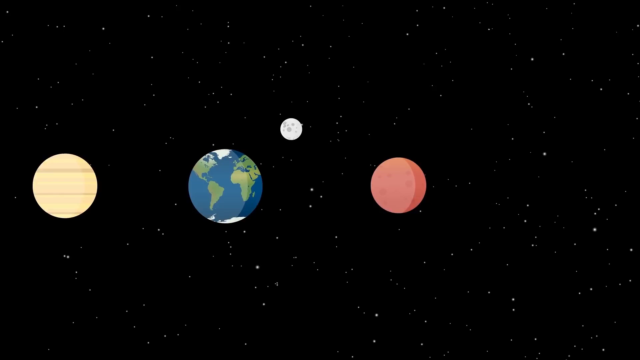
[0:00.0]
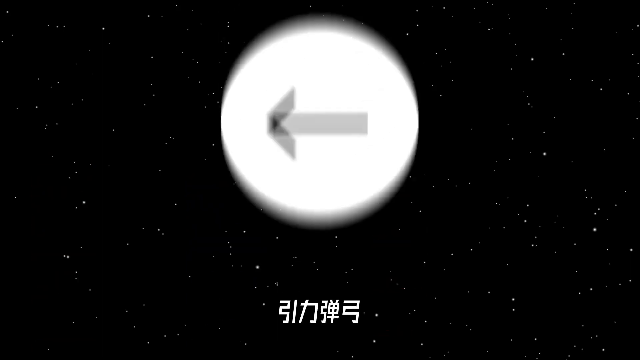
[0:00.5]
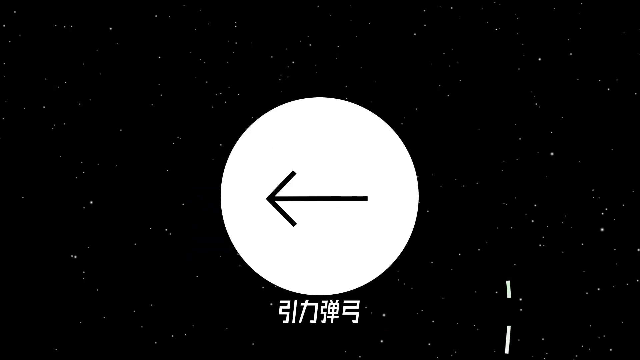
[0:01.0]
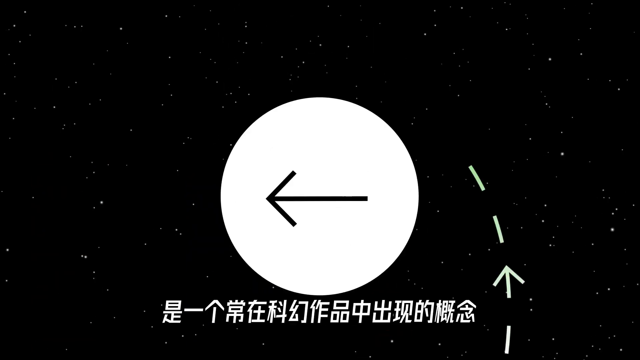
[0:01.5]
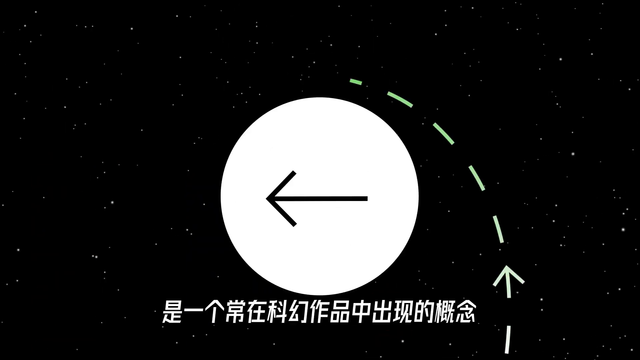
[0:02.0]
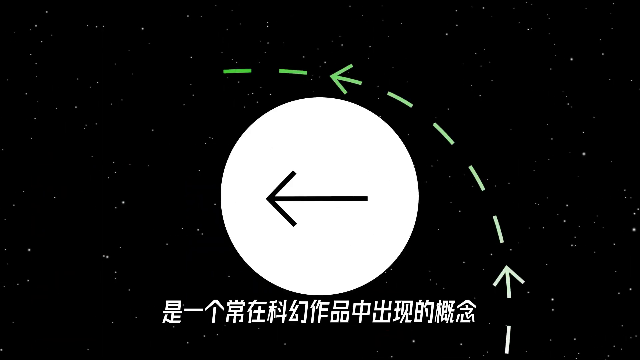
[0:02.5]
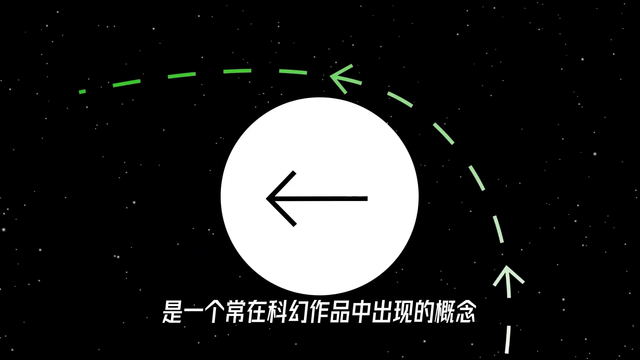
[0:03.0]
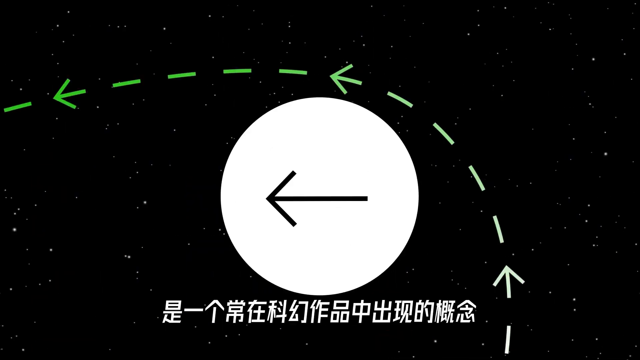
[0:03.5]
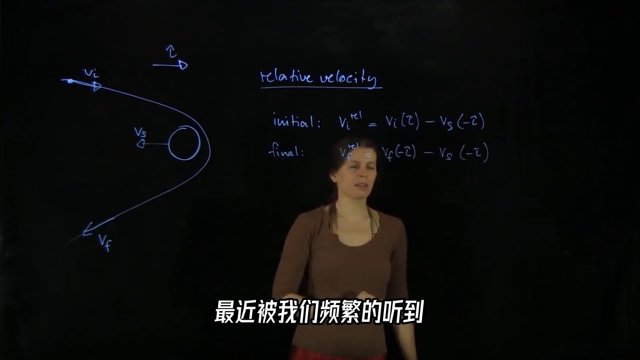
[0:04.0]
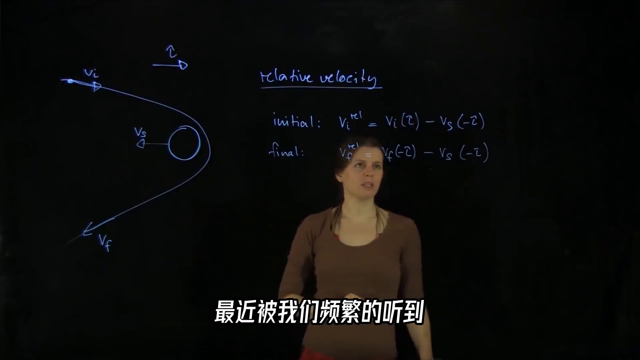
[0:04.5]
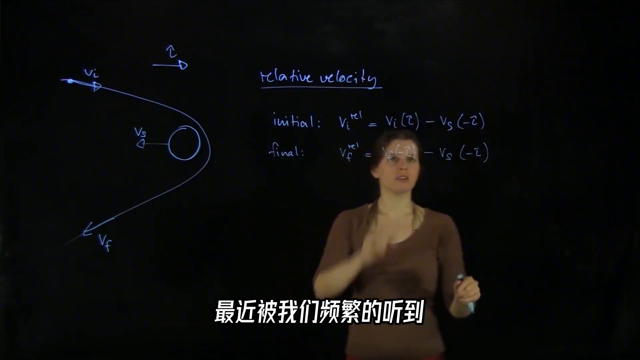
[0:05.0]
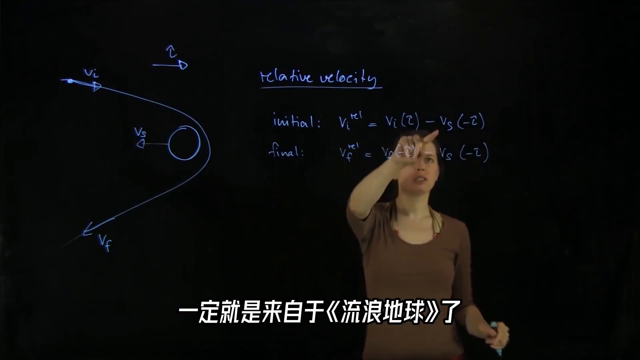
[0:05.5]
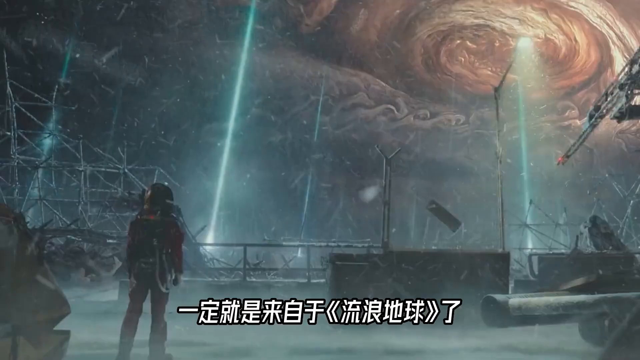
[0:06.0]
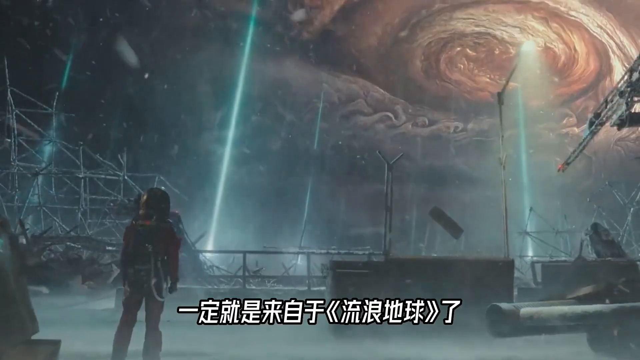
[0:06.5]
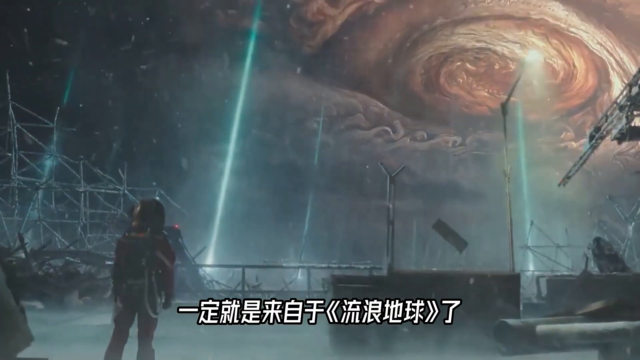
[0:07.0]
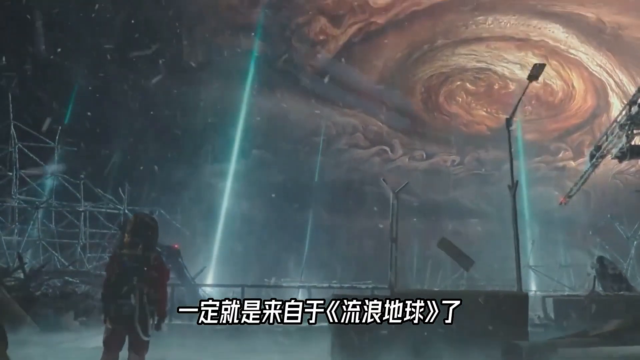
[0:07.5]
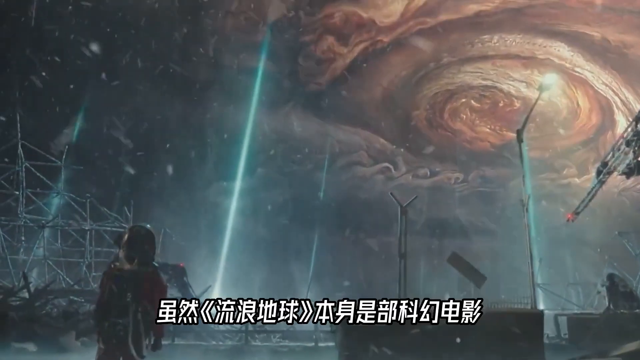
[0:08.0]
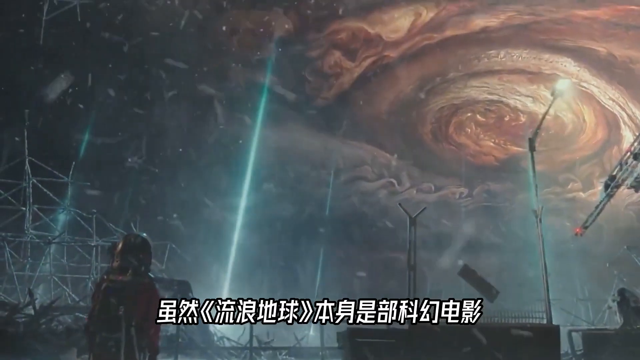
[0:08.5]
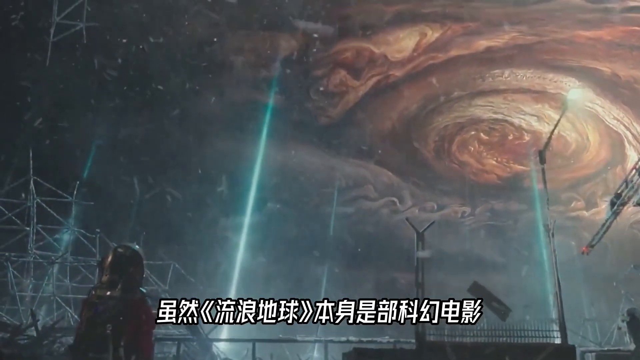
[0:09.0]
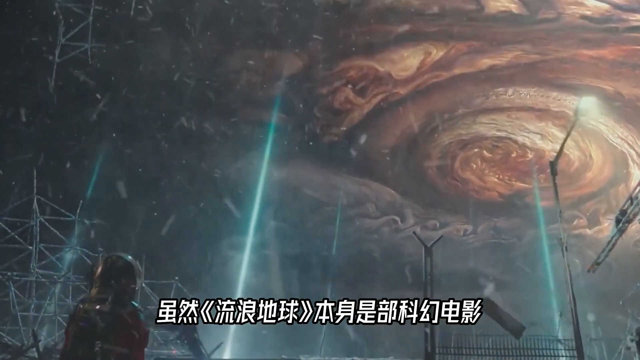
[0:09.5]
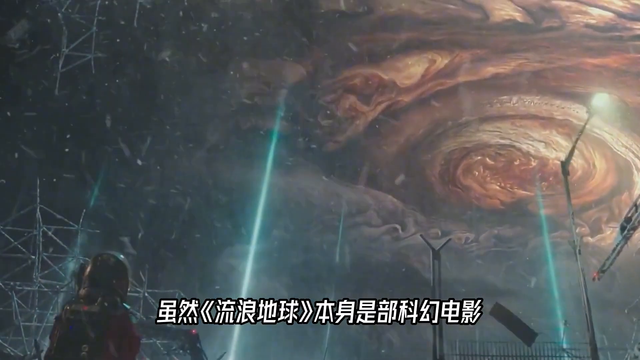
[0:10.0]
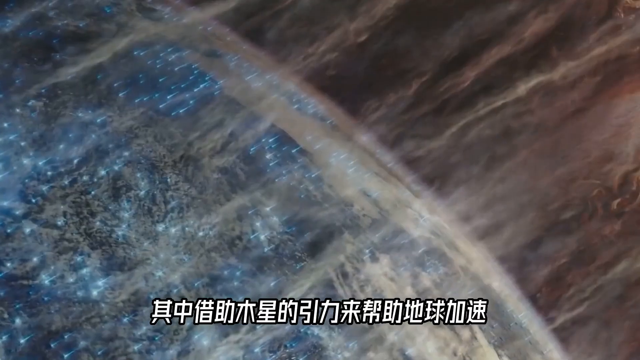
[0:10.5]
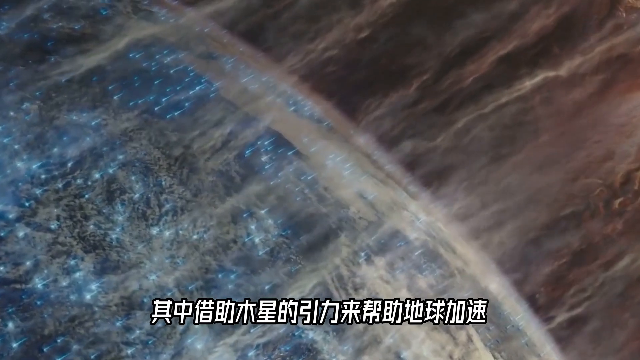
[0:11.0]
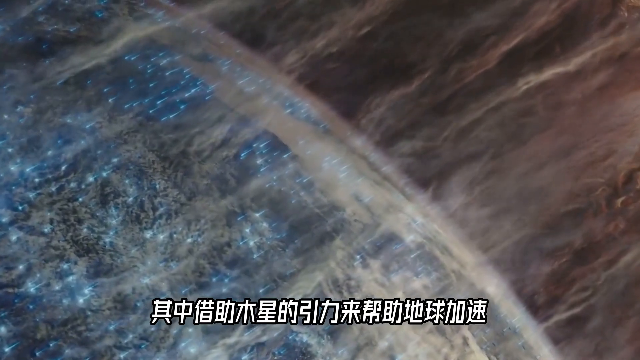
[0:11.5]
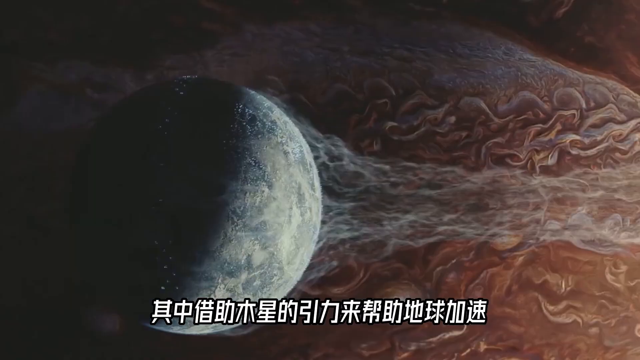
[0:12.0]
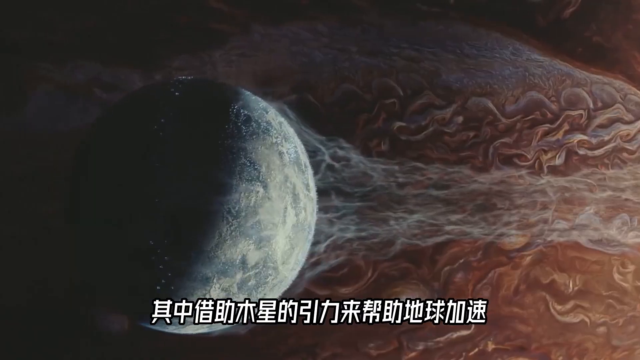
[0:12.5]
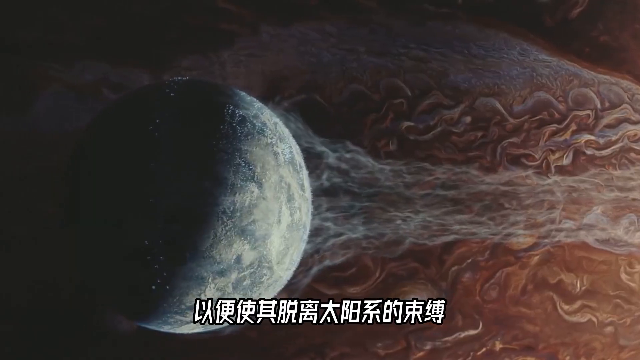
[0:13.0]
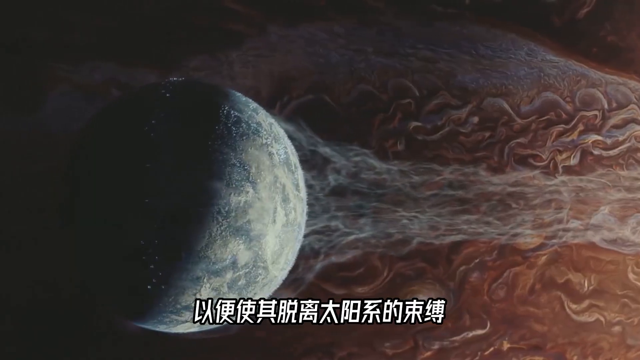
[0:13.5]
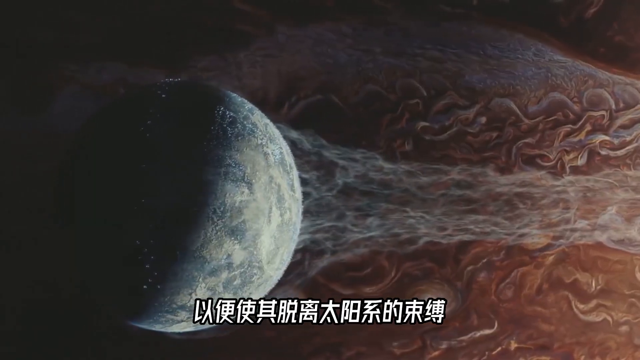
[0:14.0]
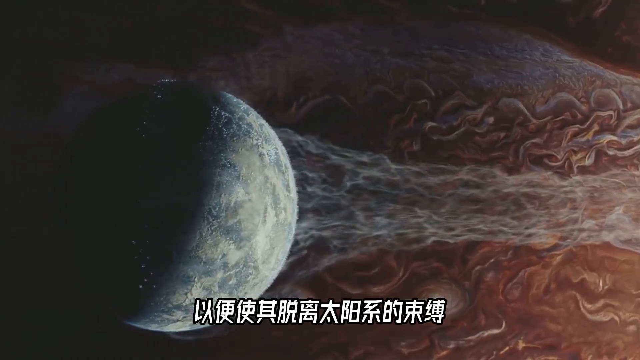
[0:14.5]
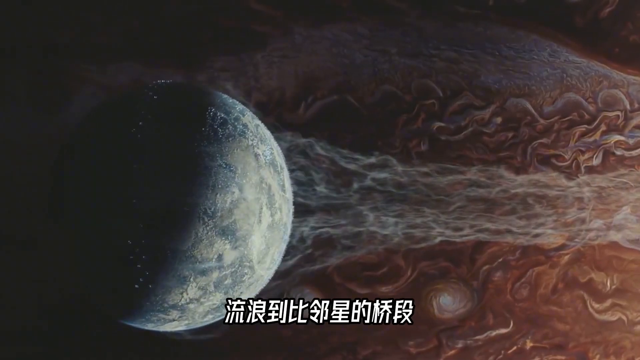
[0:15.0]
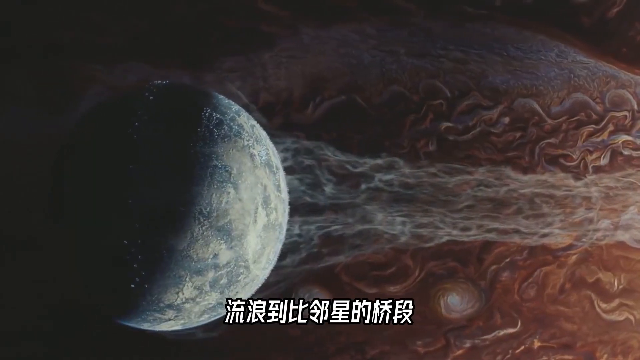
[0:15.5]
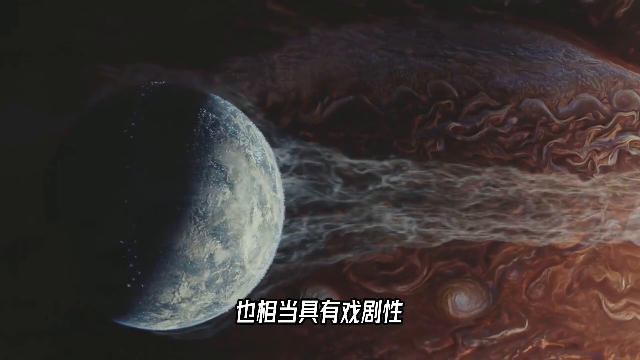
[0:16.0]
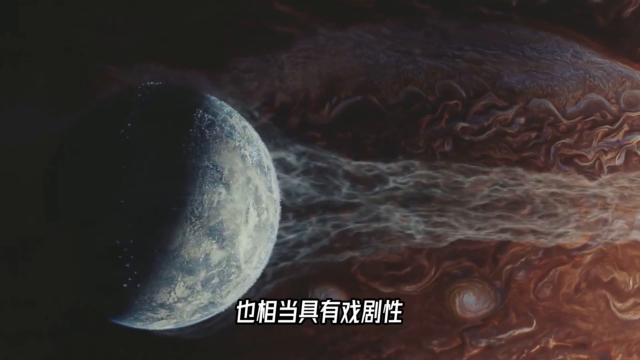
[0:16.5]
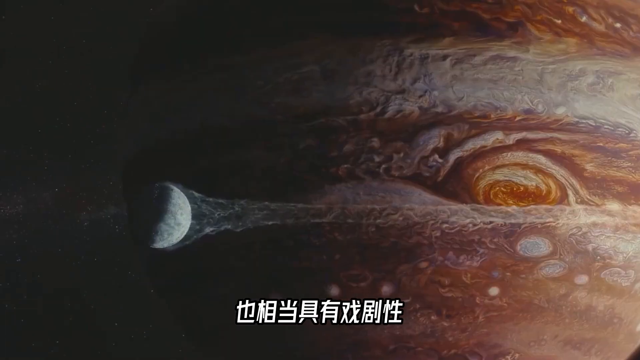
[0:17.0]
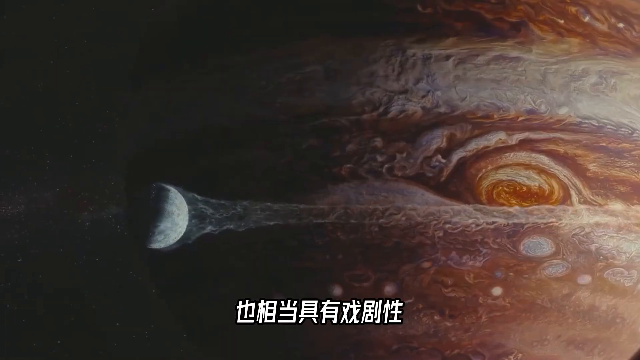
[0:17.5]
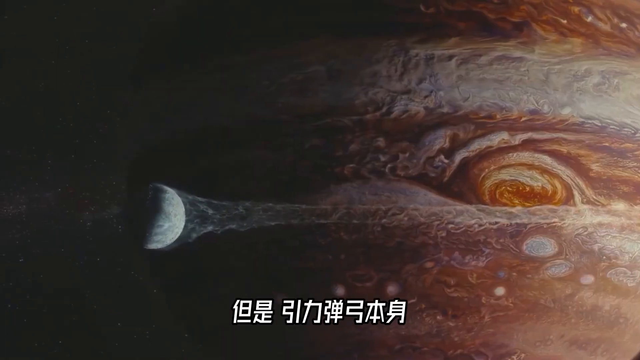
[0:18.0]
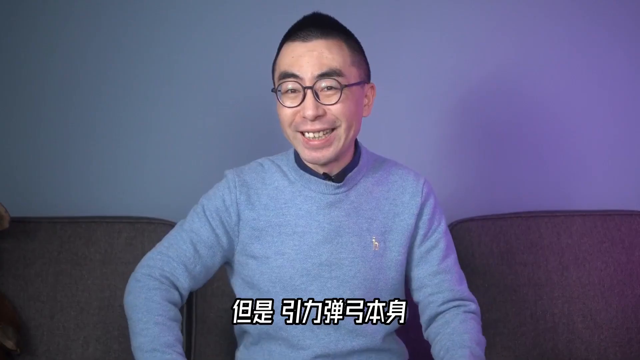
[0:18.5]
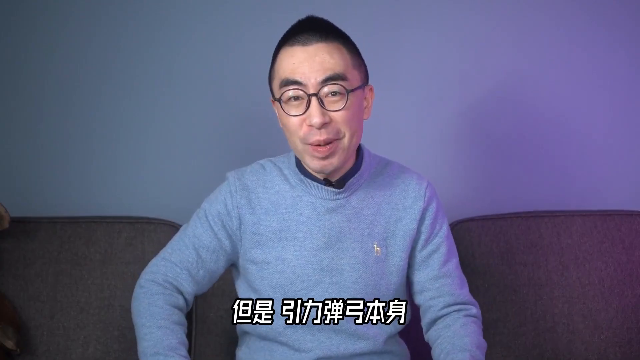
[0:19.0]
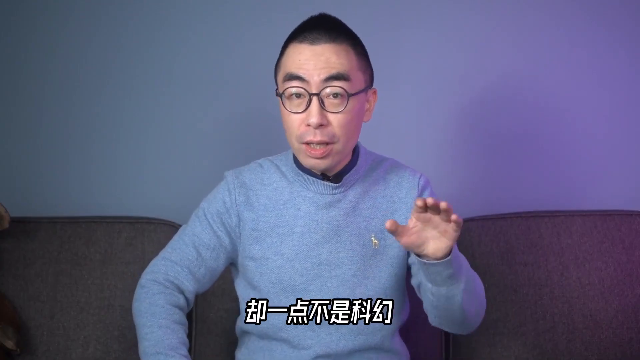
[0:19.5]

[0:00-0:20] An animation of the solar system opens the video, with planet Earth in the middle surrounded by three other planets and countless stars in the background. A new animation follows, showing a large white circle in the middle of the screen with an arrow pointing to the left at the center of the circle. A green dotted line makes its way over the large white circle and out into outer space. Next, a Caucasian woman wearing a brown shirt appears; in front of her, the theory of relative velocity is written on the screen, and she points to the equations. A computer-animated scene then shows an astronaut standing on the ground, staring up at the sky as the sky begins swirling red and some sort of cataclysmic storm occurs.